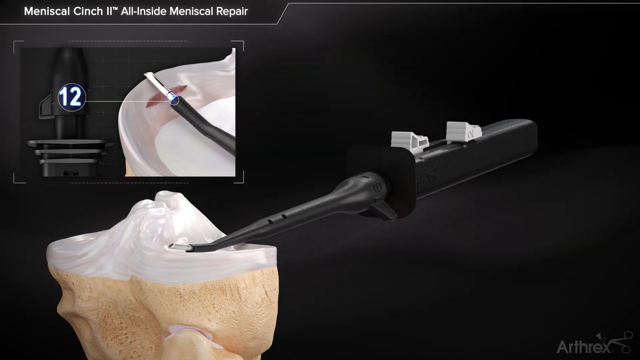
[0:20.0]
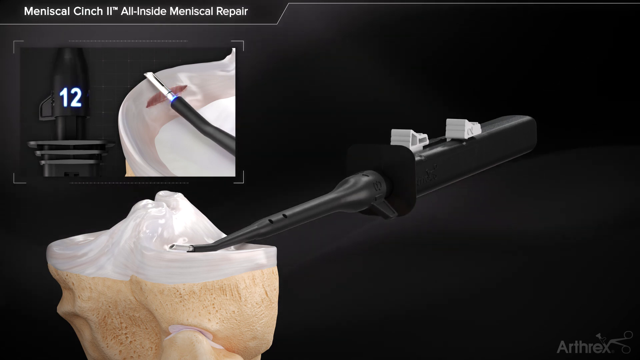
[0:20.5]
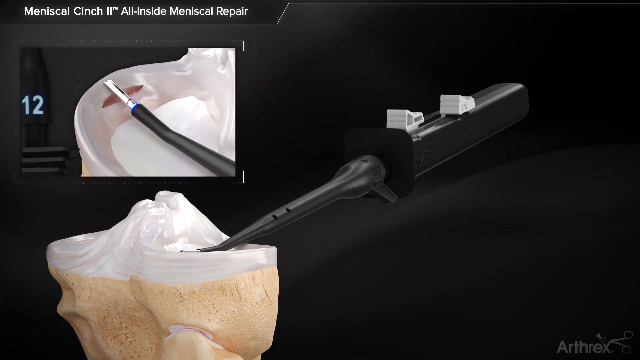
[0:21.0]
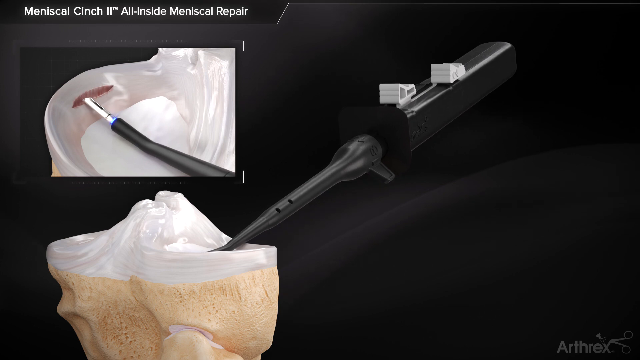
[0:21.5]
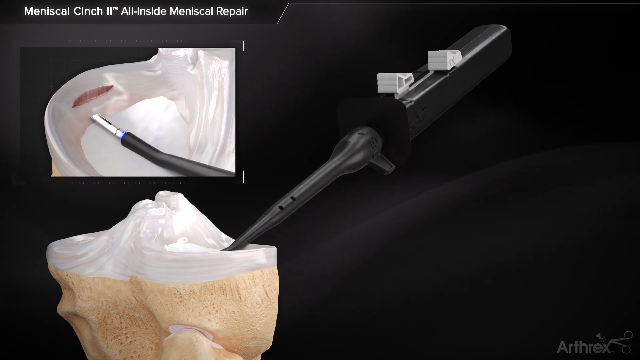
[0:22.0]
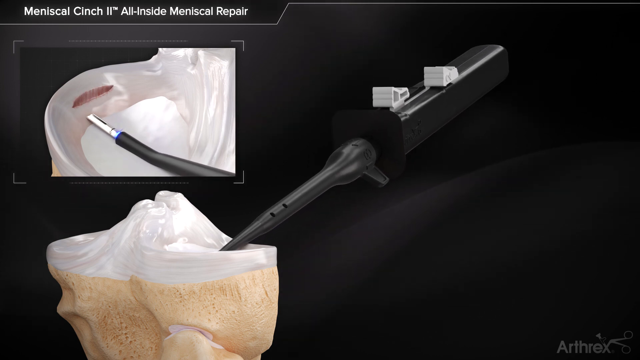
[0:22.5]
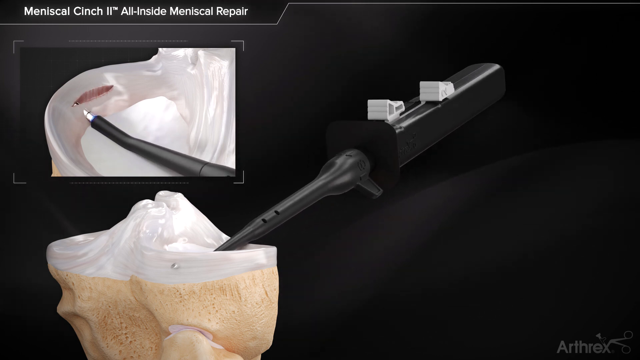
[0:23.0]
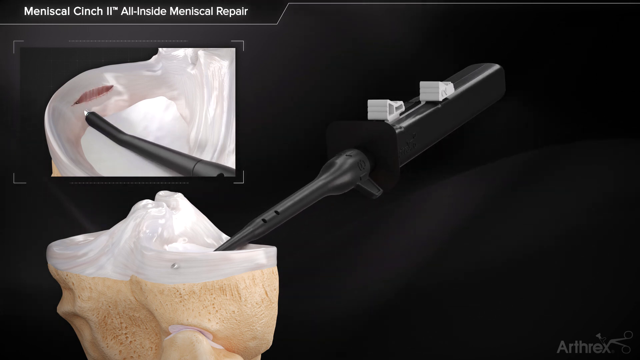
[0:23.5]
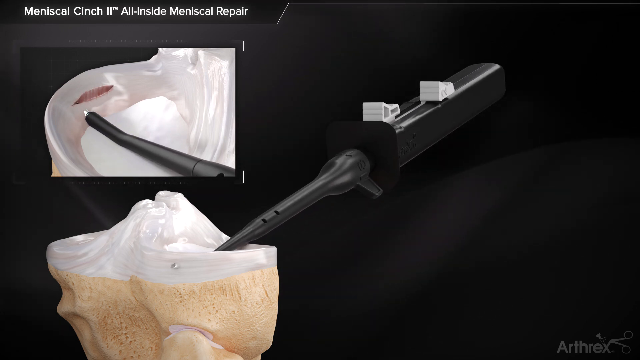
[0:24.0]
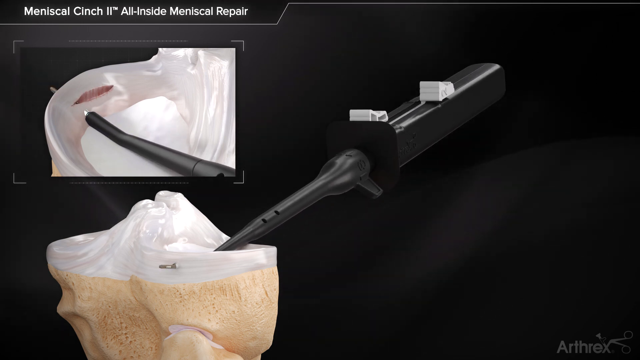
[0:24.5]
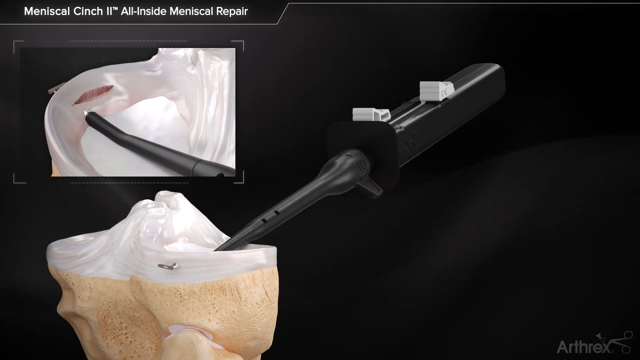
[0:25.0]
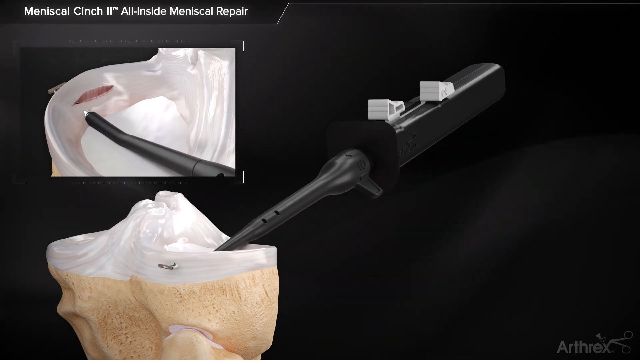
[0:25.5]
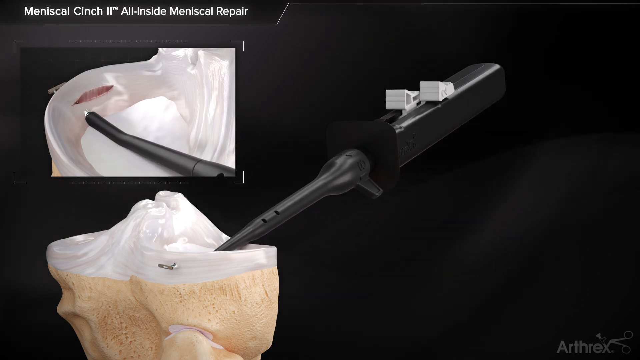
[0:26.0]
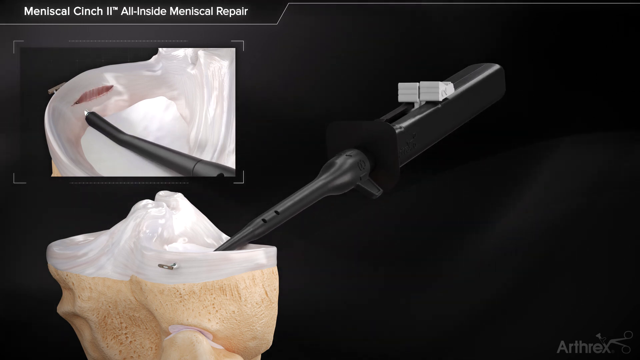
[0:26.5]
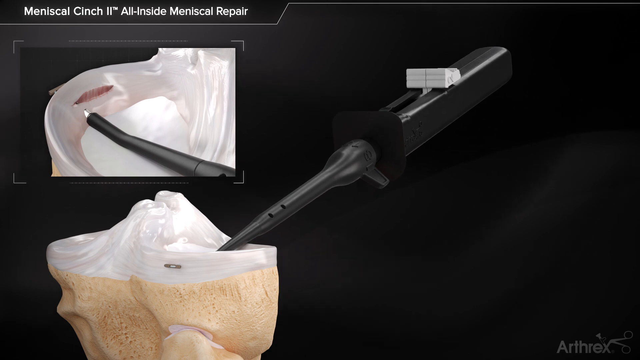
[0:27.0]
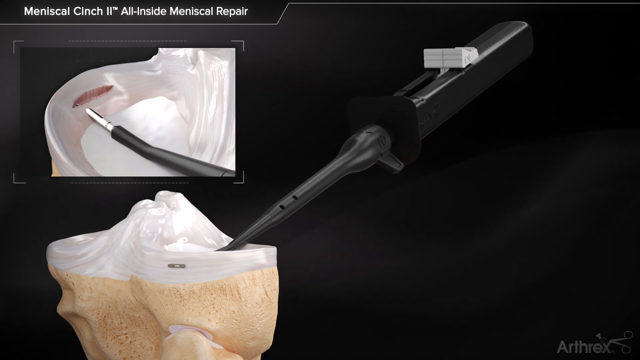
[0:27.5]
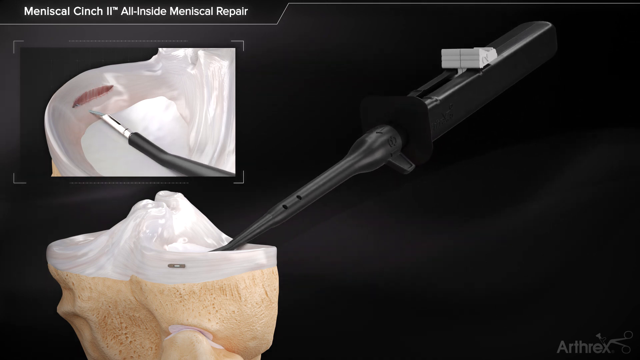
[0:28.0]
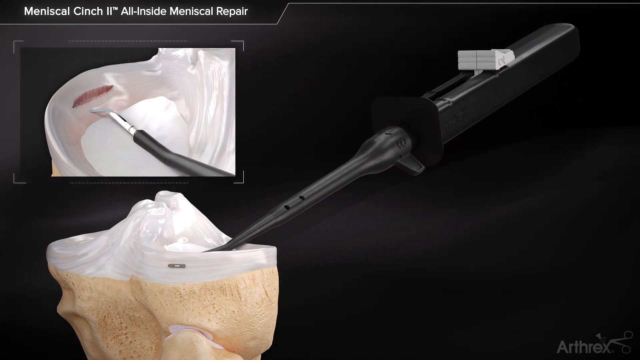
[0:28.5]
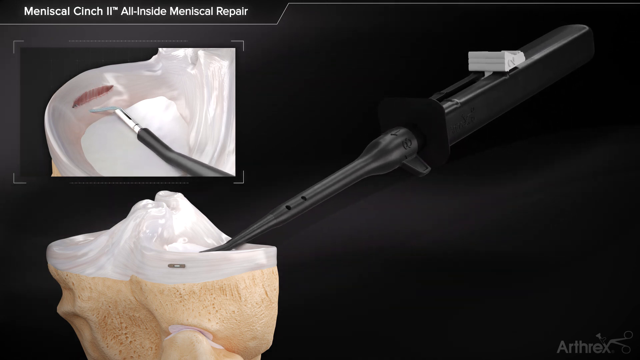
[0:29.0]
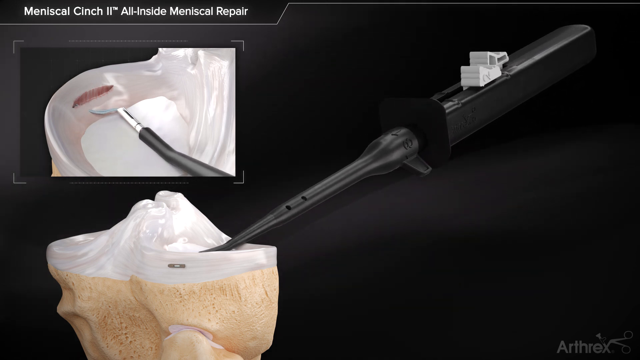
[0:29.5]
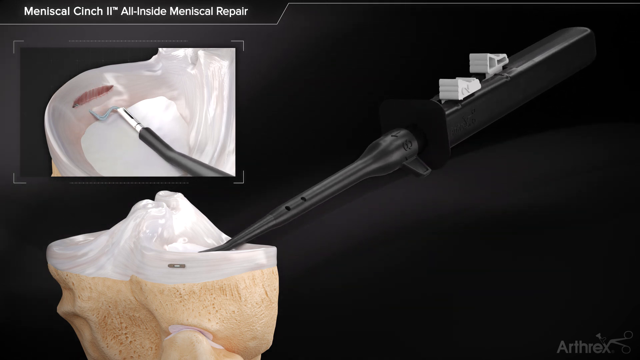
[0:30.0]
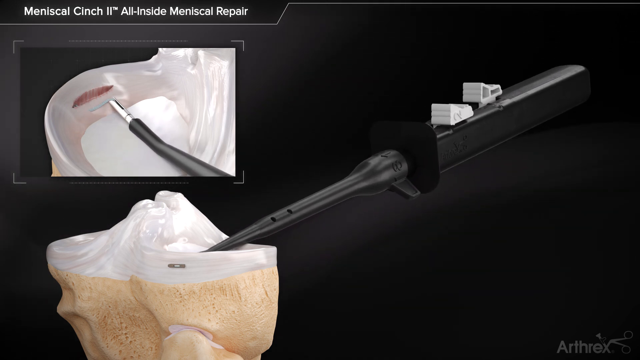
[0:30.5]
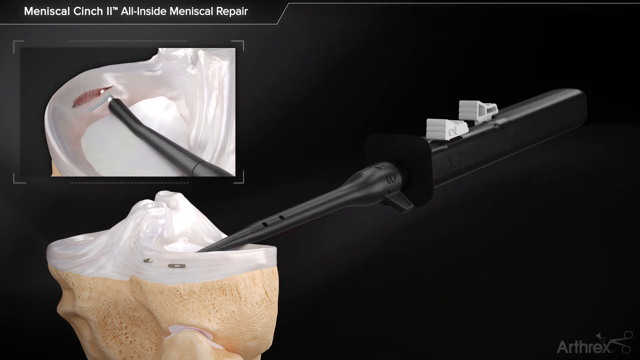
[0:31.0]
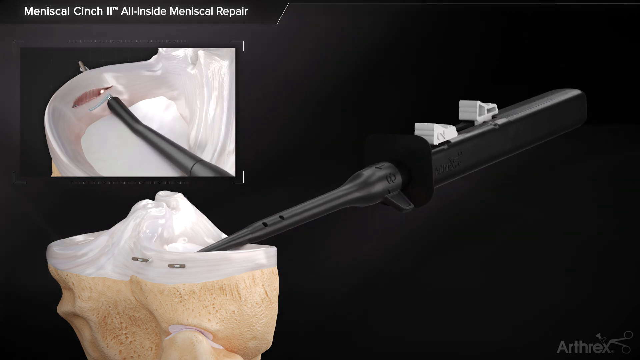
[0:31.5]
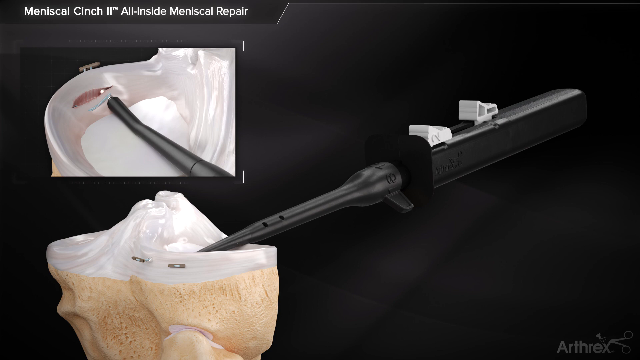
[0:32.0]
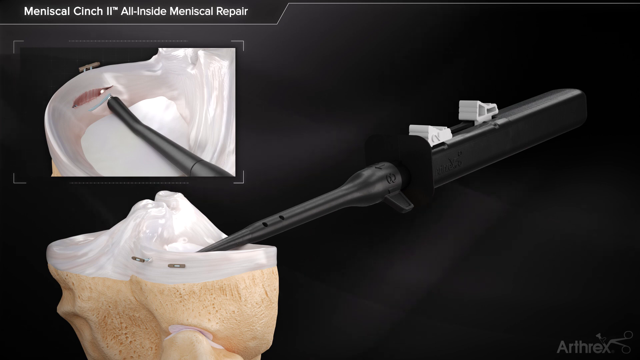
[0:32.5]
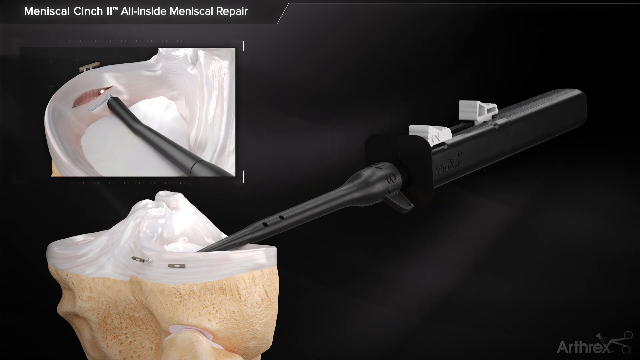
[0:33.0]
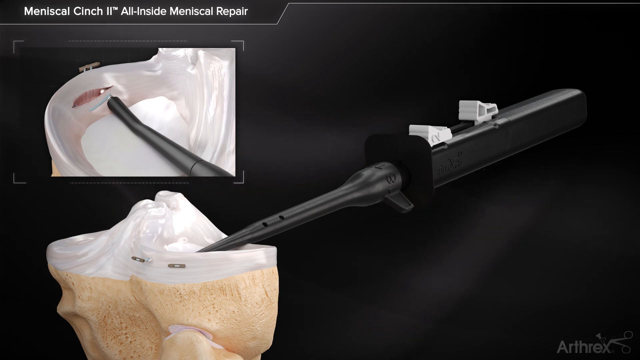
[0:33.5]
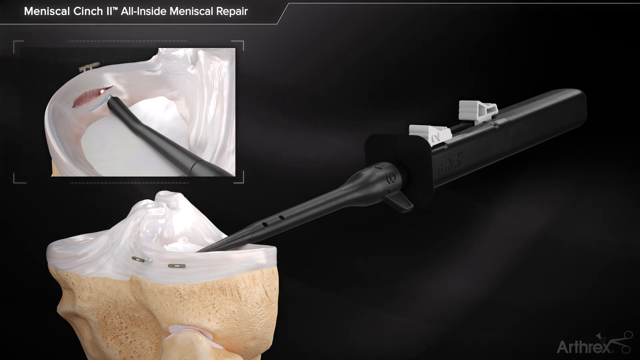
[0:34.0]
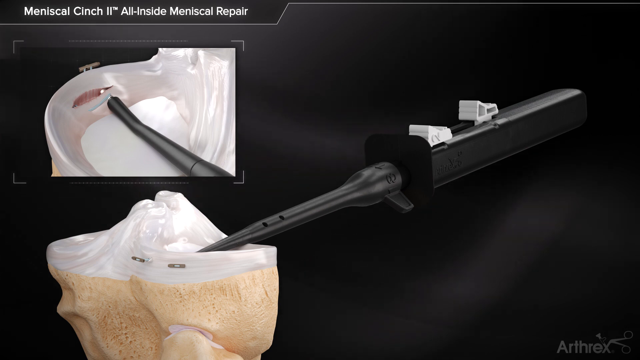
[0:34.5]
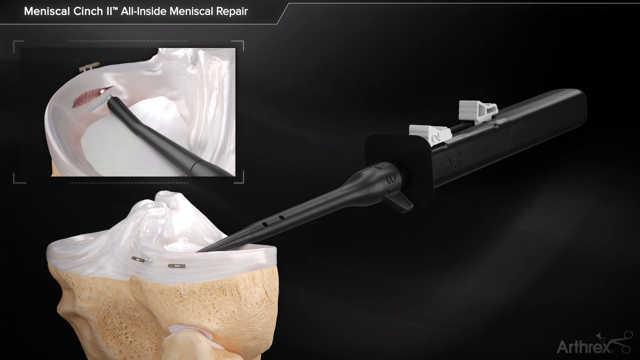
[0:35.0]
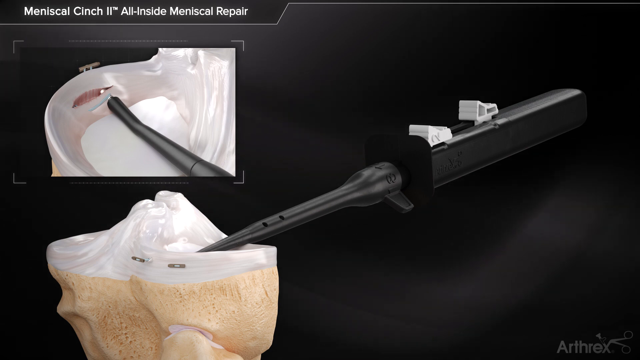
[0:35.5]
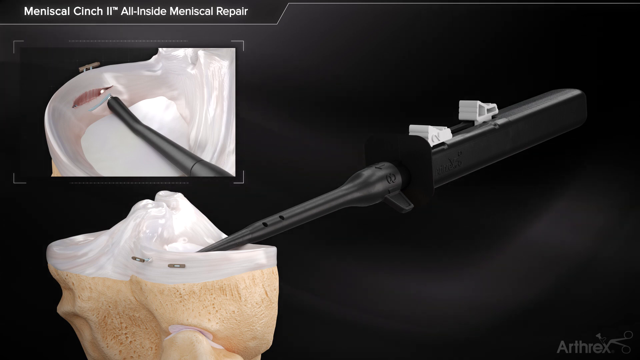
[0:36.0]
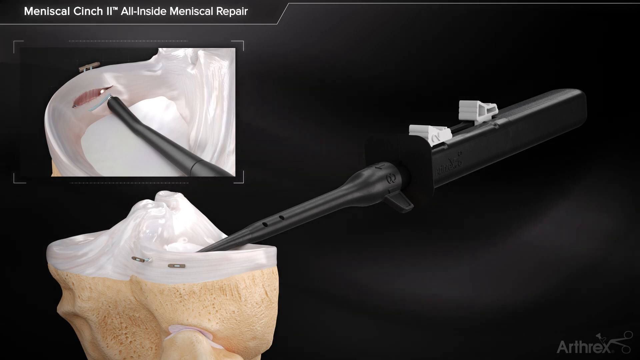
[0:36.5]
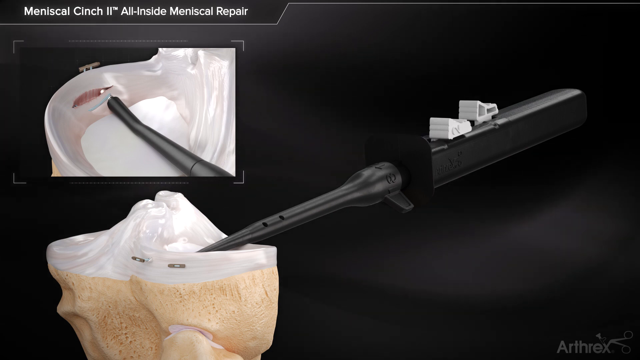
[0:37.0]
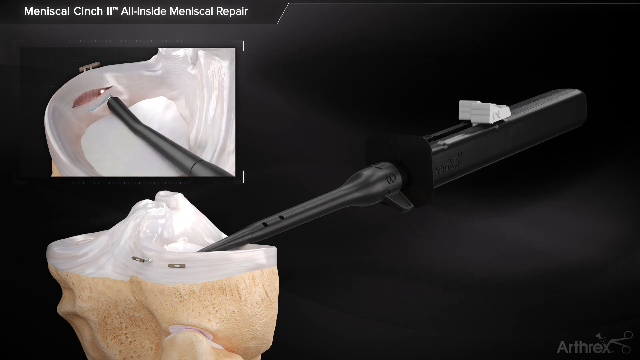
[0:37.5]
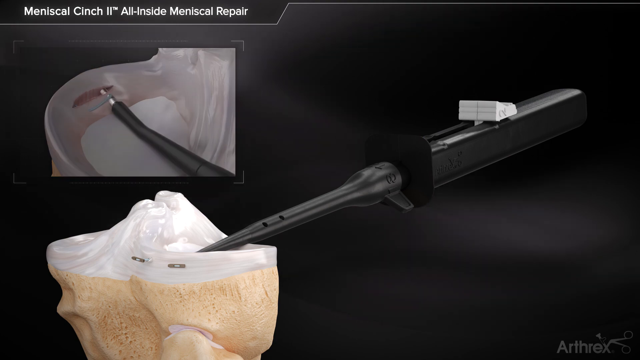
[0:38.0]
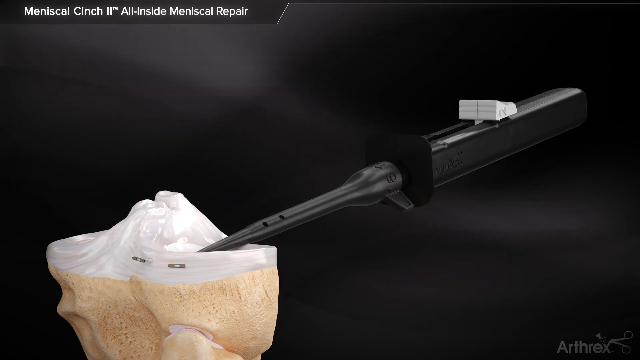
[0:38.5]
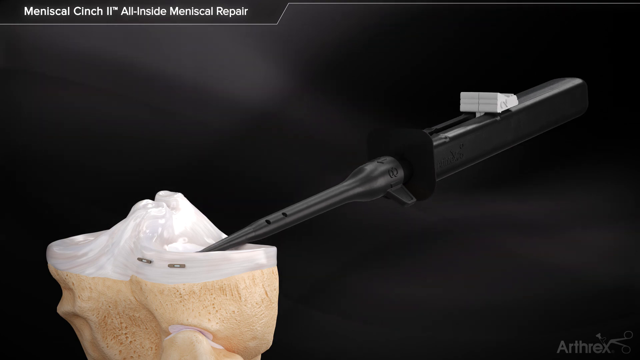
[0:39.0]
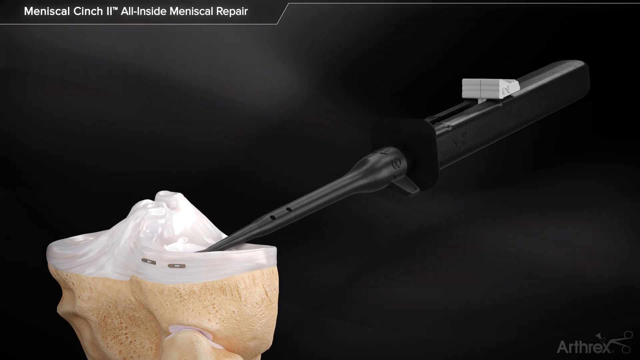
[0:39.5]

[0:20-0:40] At the very top left of the video, white text reads "Meniscal Cinch 2 All Inside Meniscal Repair." Below that, at the top left, is a small square box. On the left side of the box is a black plastic device with the number 12 written on it, and underneath it are more black plastic, roughly square shapes inserted in. The number 12 points to the right toward another device with a black plastic handle and a metal top, which is laid on a bright white, creamy-looking substance. At the very bottom left is that white, creamy-looking substance with two crevices in it, and underneath it is a harder-looking texture of a light brown color. As the video plays, the view and the object on the right seem to move together. In the box, the metal portion enters the white, creamy substance. The object on the right in the middle presses forward, appearing to attach something and enter that area, apparently putting some type of gray liquid inside the white, creamy-looking object.